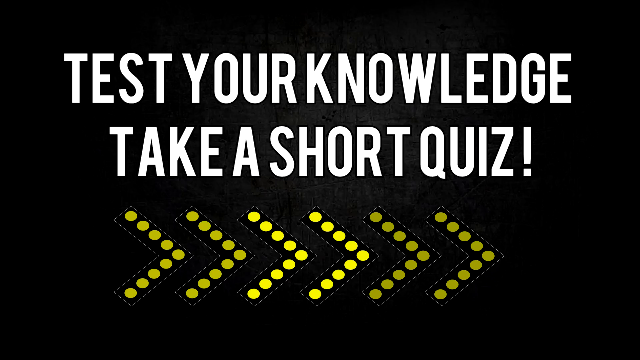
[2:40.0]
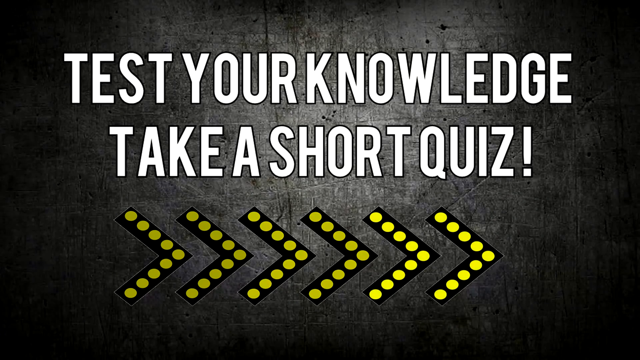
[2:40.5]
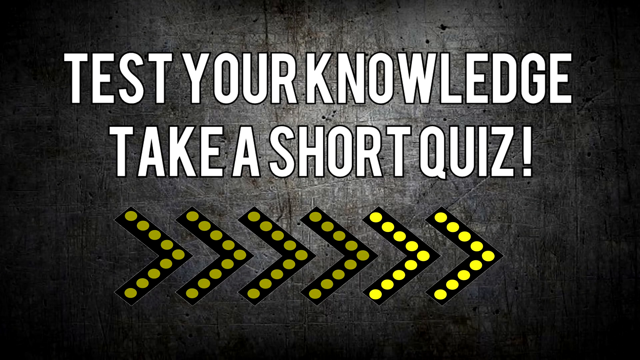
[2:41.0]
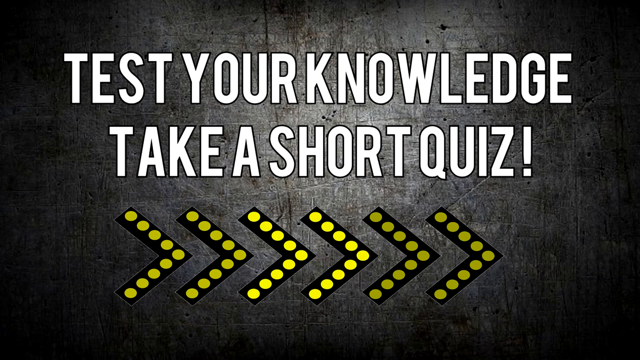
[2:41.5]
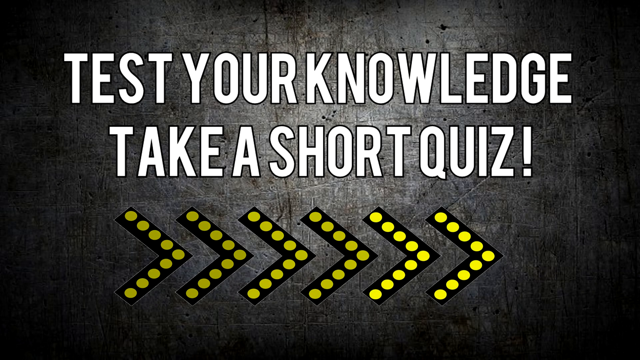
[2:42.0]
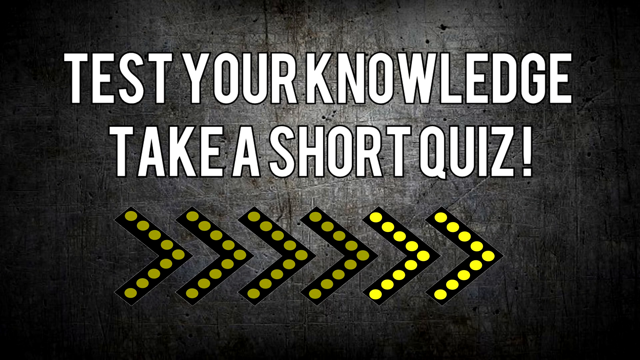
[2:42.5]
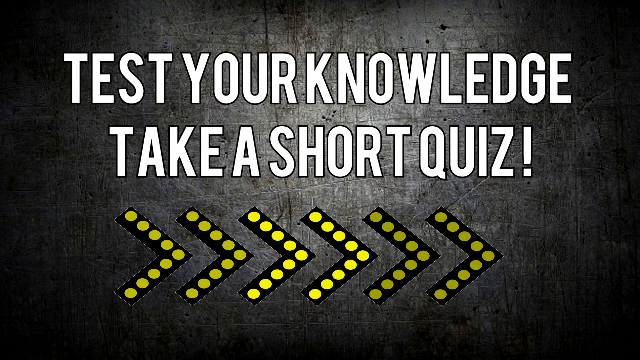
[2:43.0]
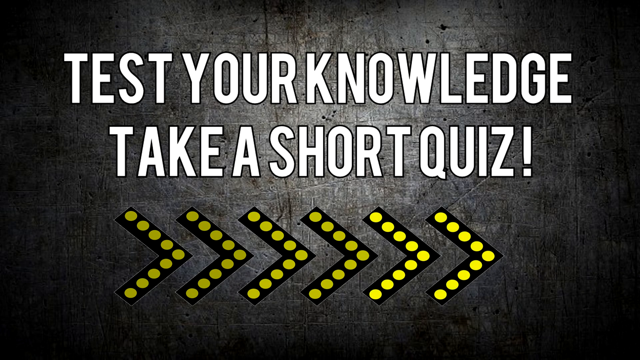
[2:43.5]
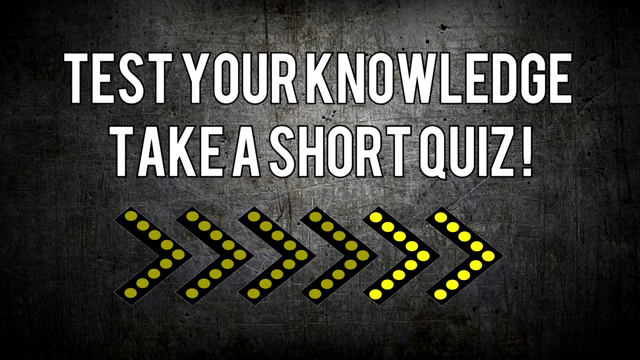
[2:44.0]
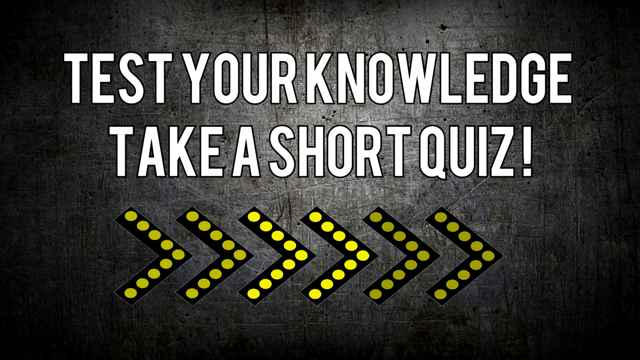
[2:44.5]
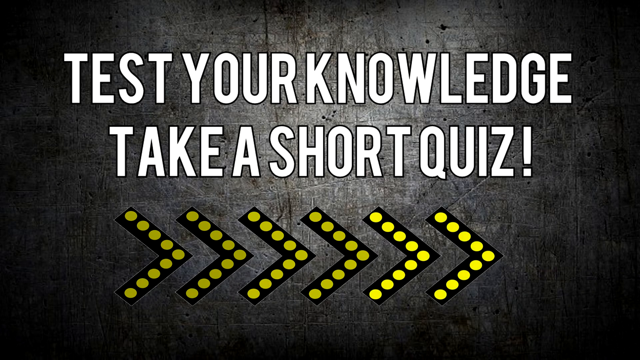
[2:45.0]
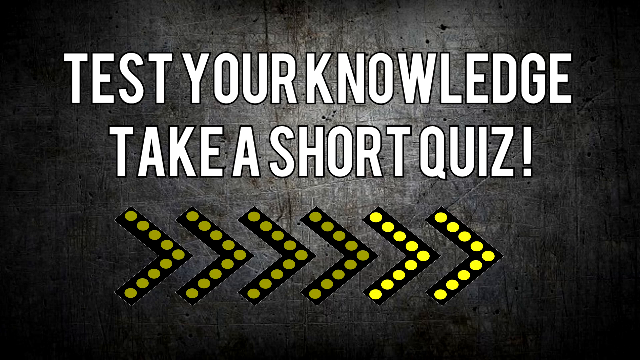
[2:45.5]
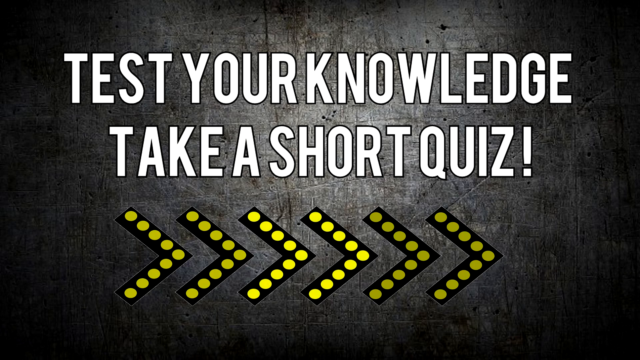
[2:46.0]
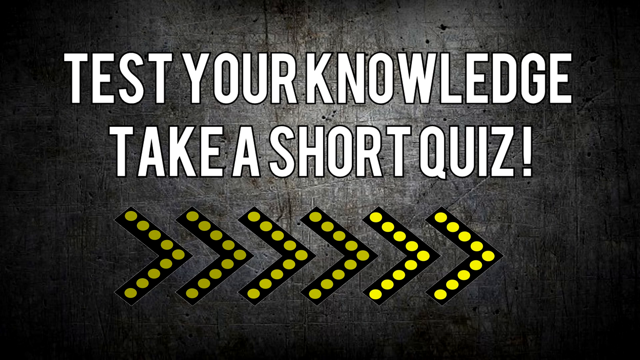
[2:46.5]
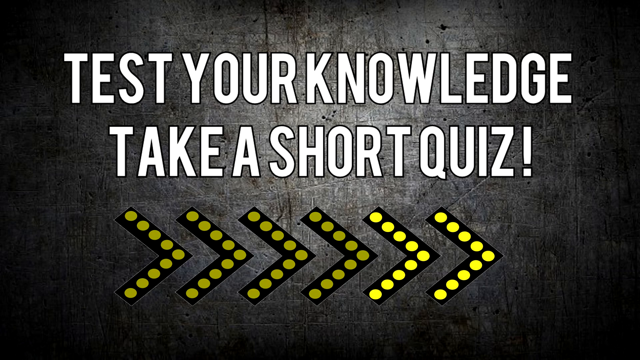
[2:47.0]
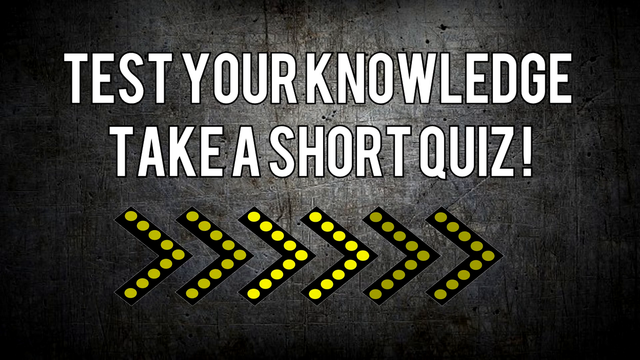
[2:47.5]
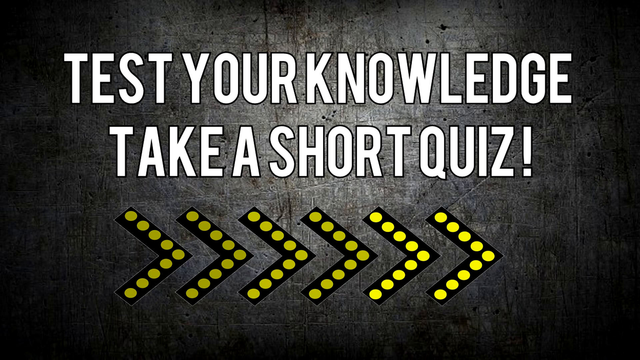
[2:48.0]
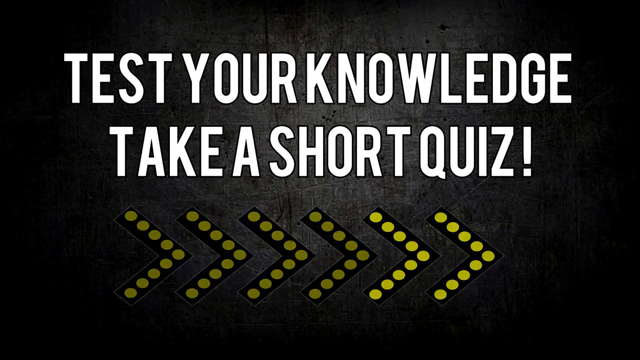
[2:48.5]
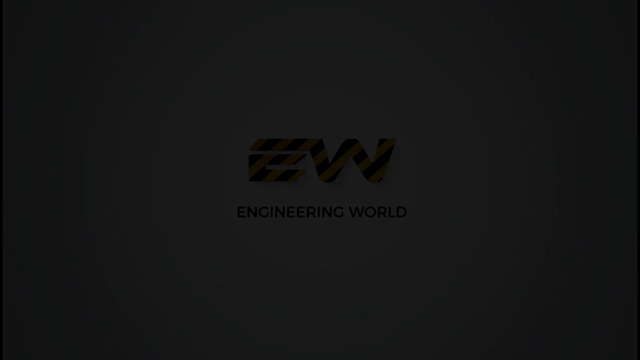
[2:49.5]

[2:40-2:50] On a gray background, text reads "test your knowledge. Take a short quiz!" with arrows pointing to the right that flash like yellow lights. The final shot shows "EW Engineering World" with yellow and black stripes on the EW.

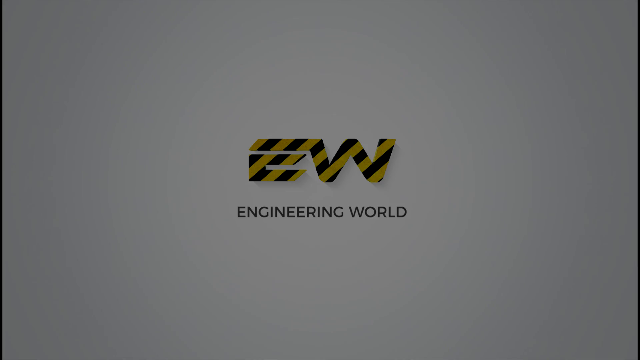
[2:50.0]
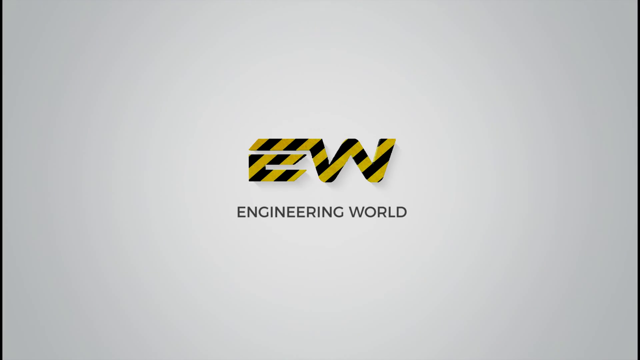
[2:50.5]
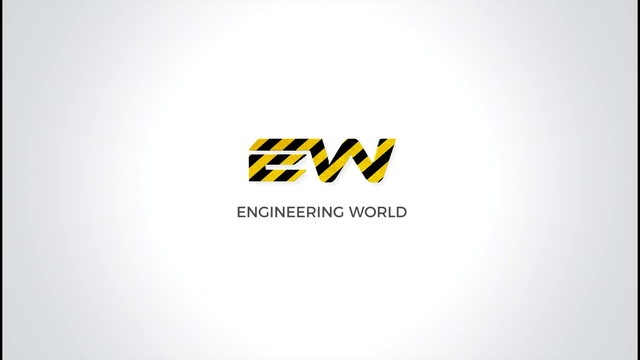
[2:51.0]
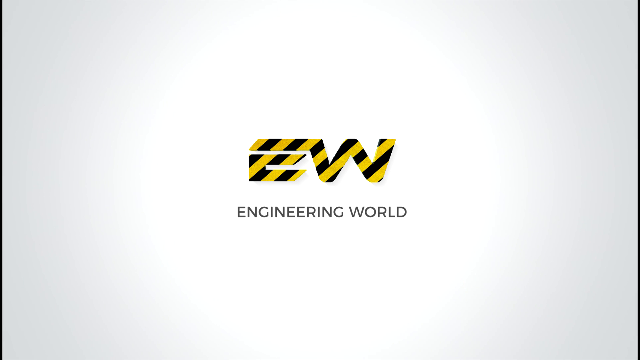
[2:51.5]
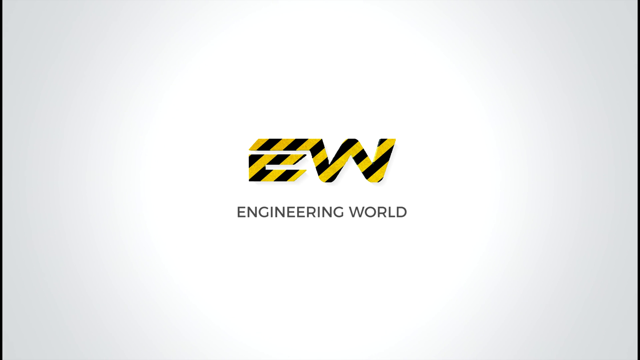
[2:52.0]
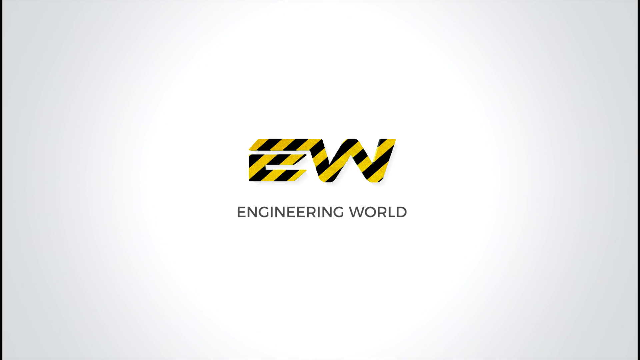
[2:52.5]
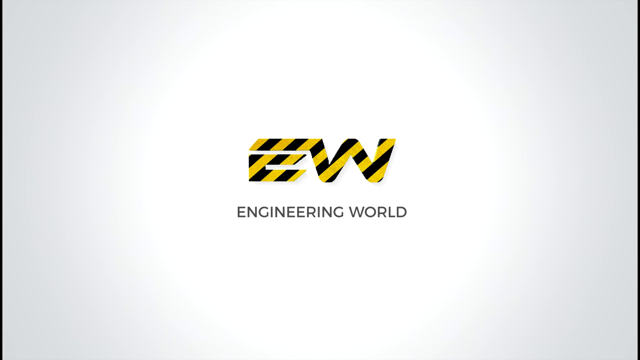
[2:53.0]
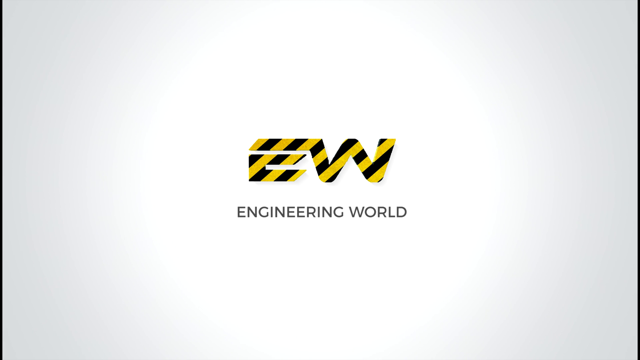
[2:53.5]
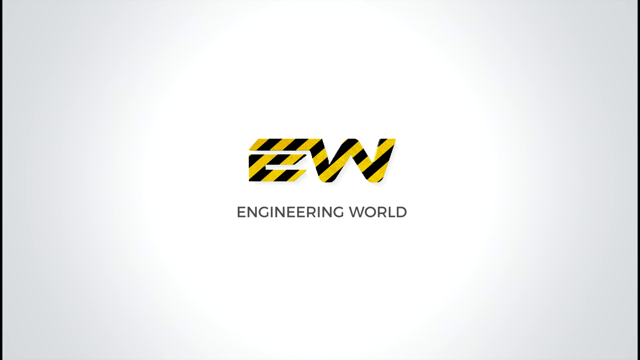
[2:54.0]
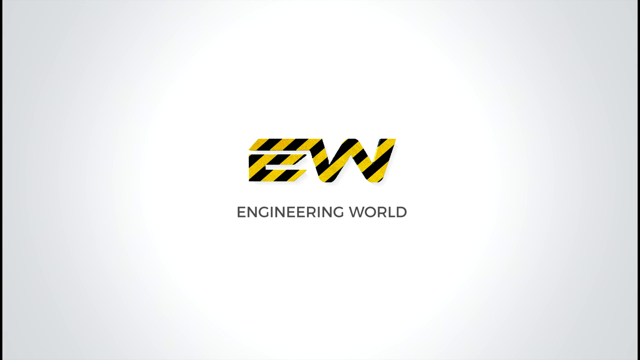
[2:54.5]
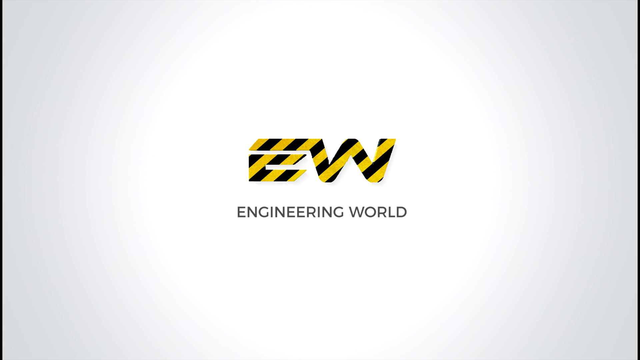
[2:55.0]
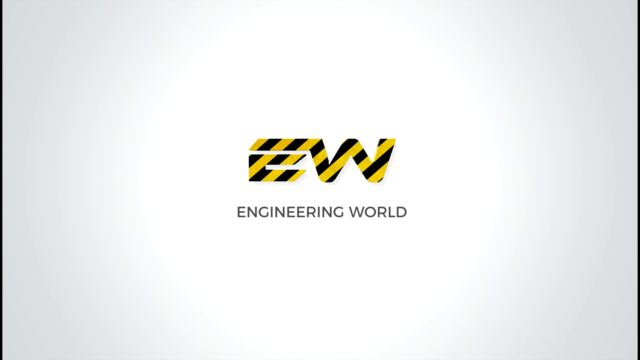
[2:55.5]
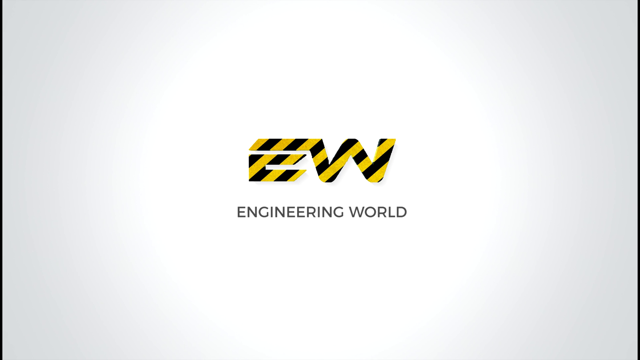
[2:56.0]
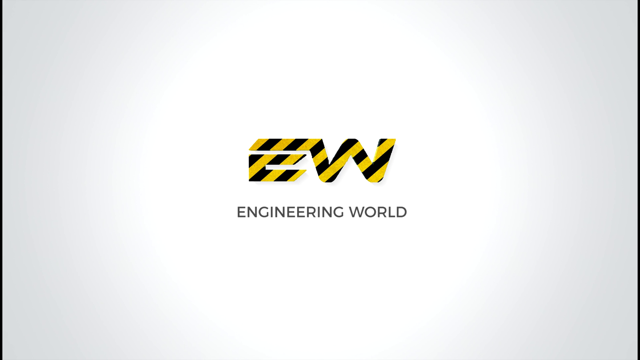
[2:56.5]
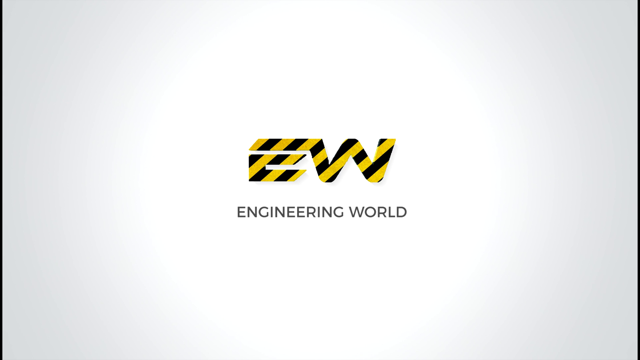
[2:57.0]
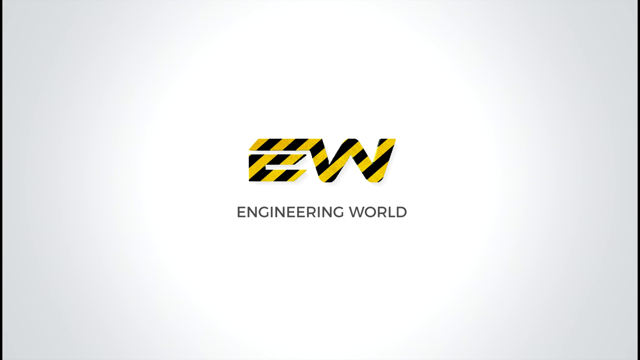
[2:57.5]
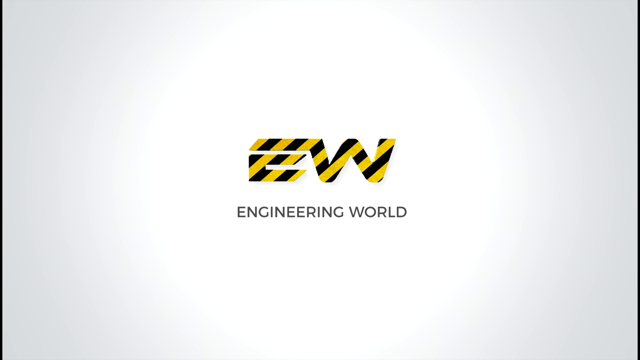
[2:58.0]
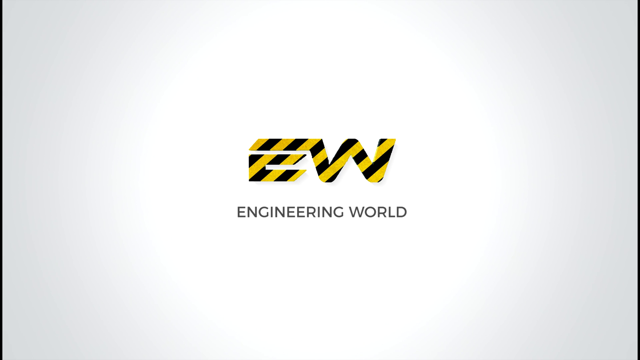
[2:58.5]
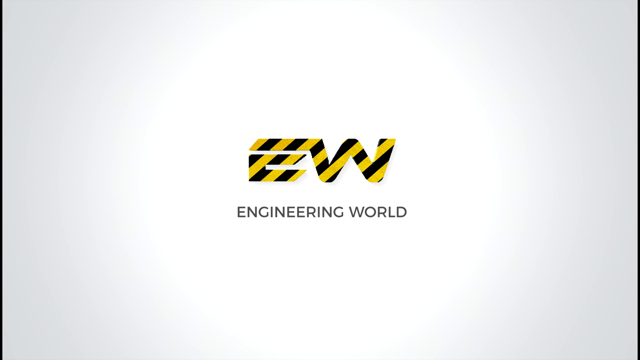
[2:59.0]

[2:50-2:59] The "EW engineering world" logo appears on a white background. The W has yellow and black stripes, and the "engineering world" text is black.